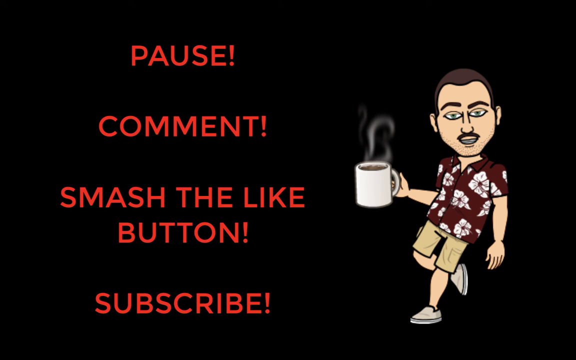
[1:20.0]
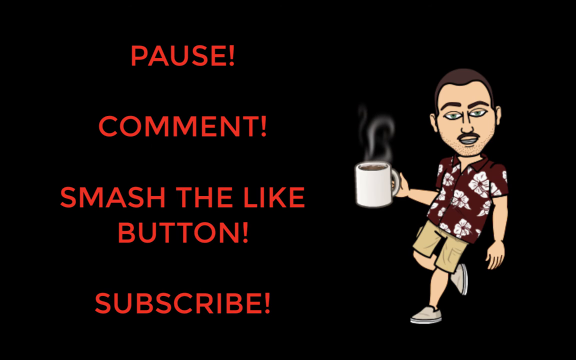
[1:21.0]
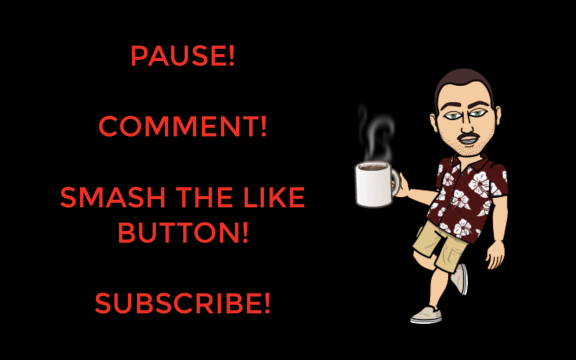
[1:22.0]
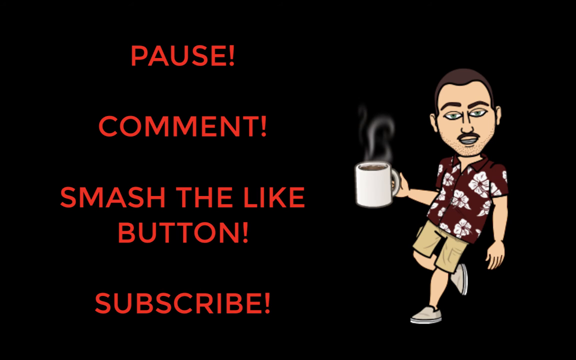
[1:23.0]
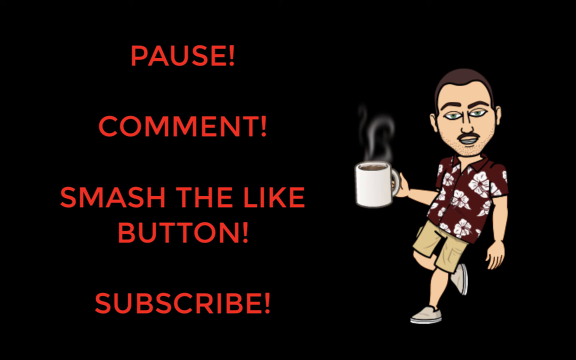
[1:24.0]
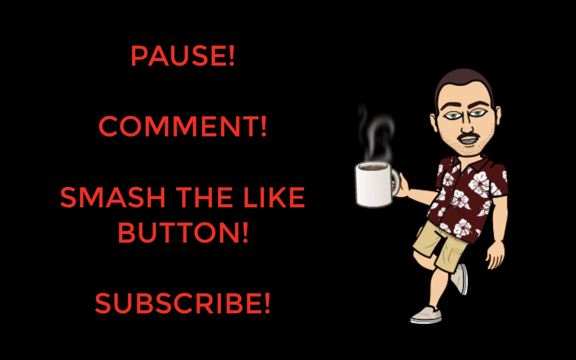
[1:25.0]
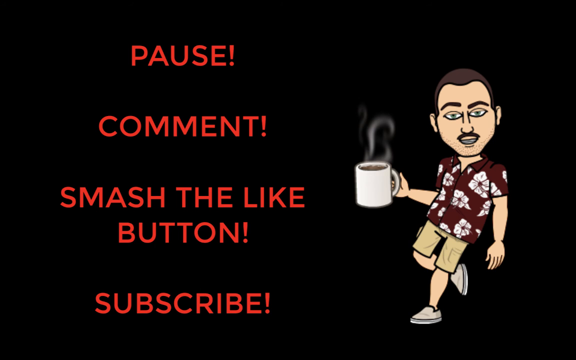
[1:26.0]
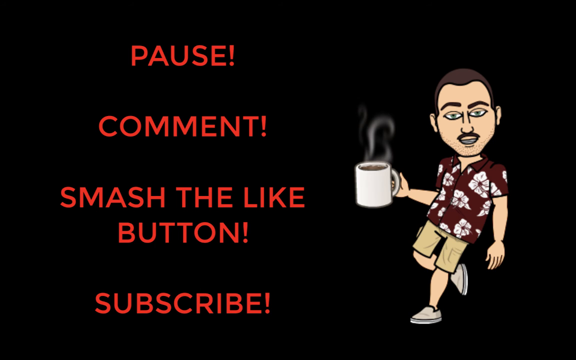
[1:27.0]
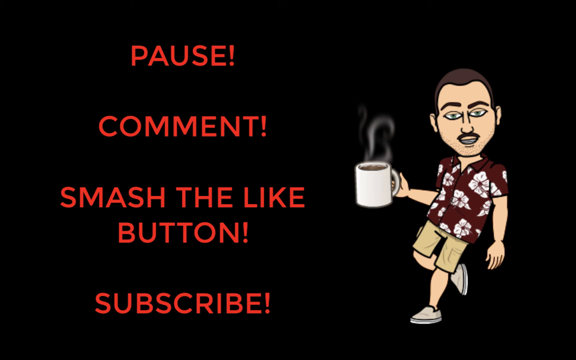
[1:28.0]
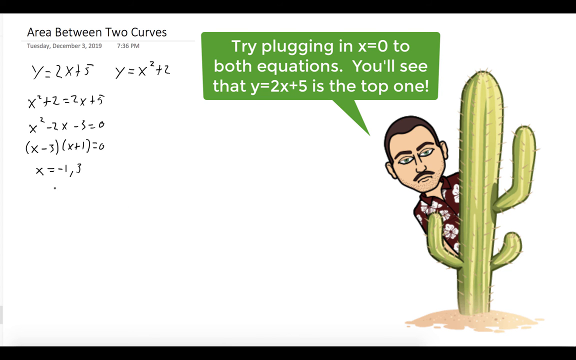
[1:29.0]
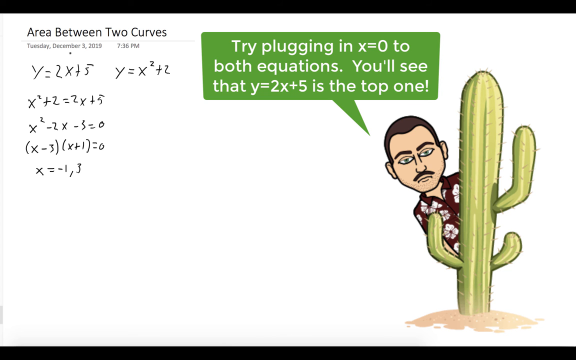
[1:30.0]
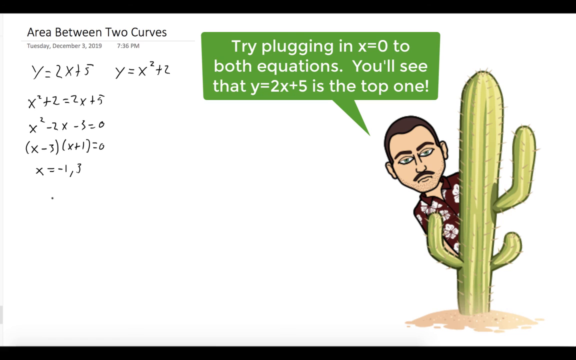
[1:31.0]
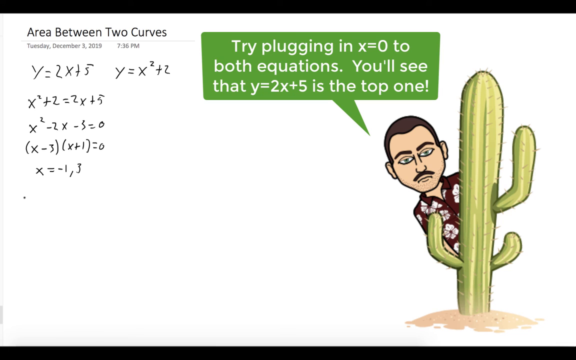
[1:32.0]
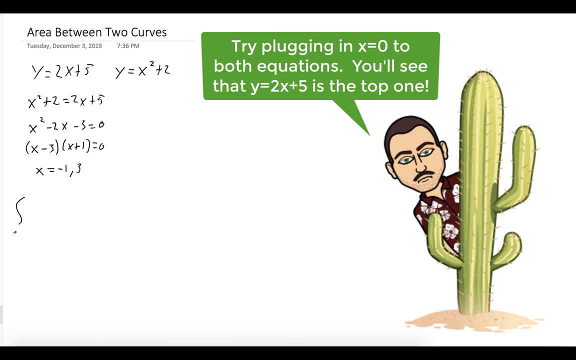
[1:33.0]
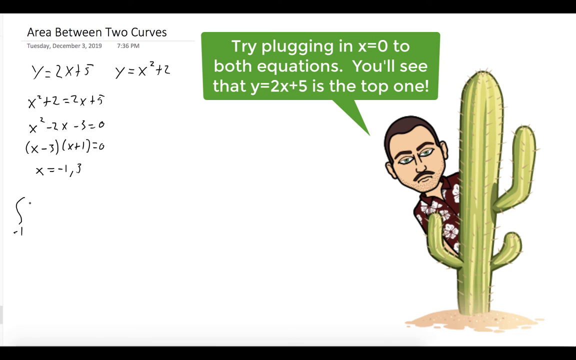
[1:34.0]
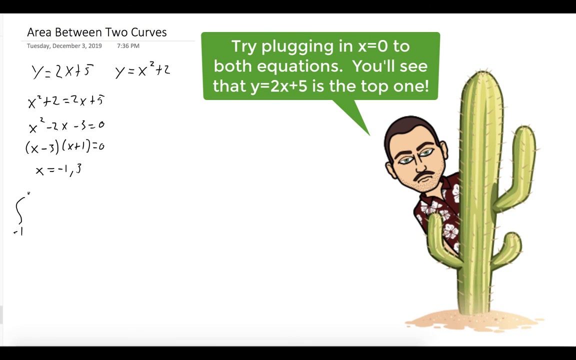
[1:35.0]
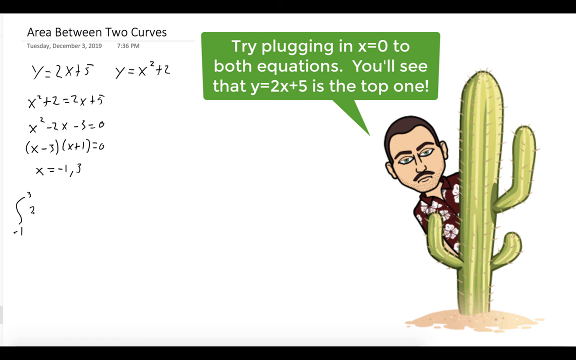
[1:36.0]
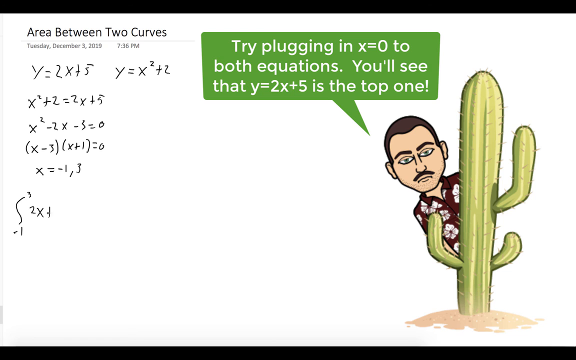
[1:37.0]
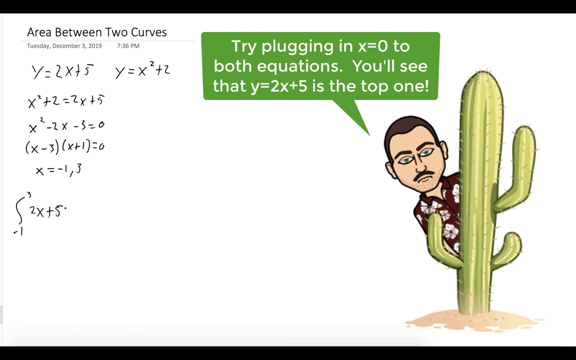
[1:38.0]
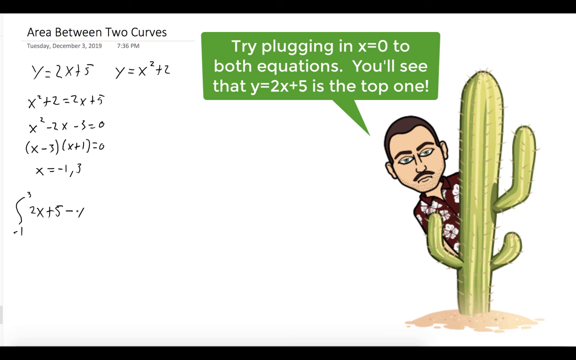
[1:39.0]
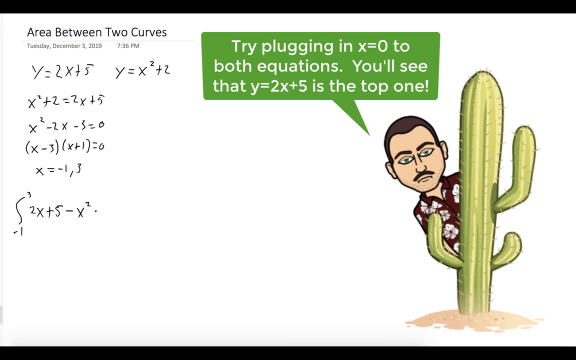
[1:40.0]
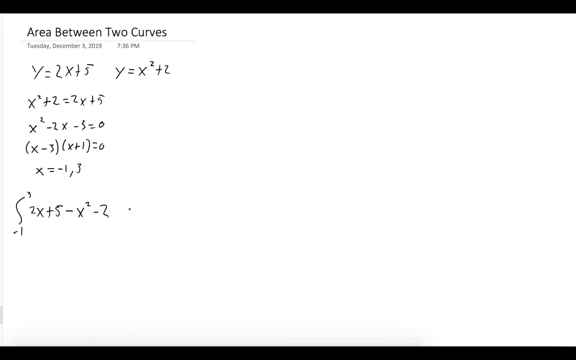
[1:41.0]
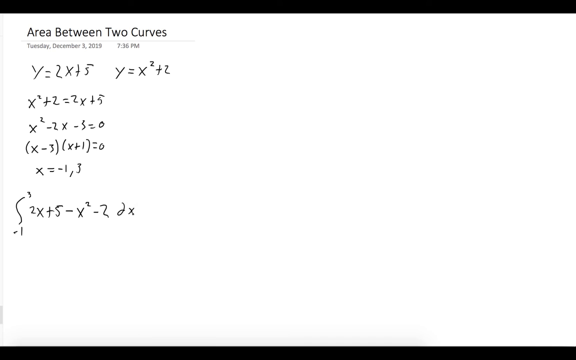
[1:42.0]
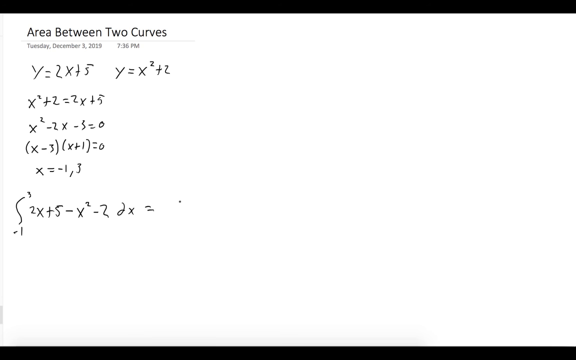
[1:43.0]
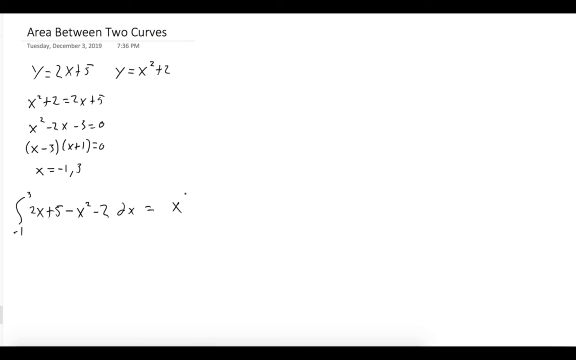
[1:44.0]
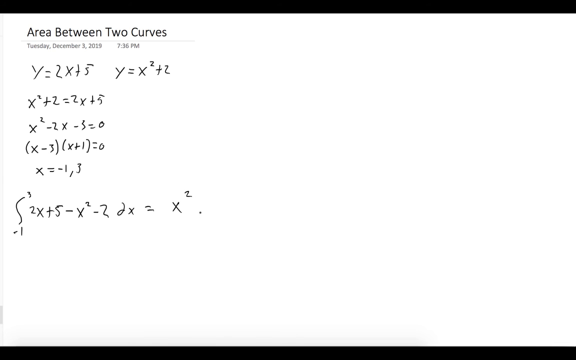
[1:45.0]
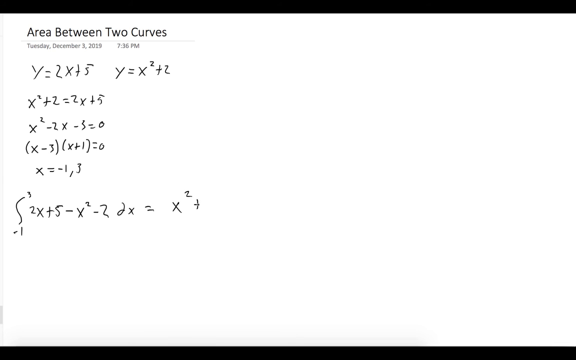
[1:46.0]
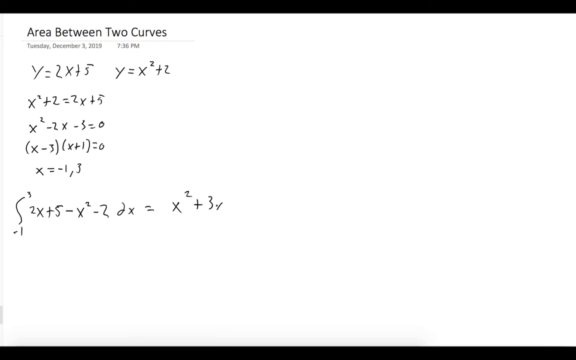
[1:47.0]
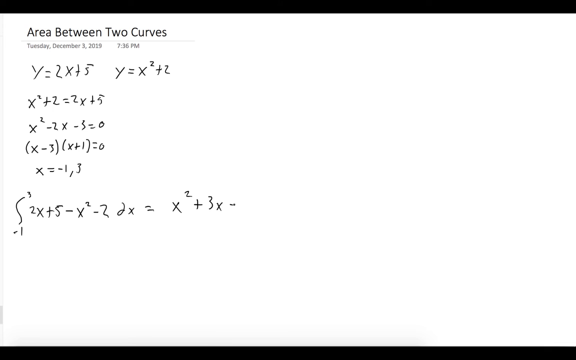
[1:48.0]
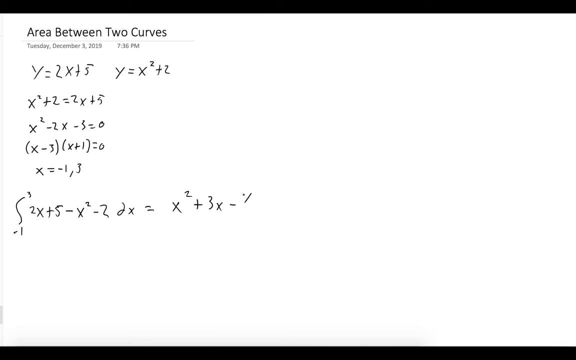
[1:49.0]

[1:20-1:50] After the "pause, comment, smash the like button, and subscribe" screen, the video returns to the rest of the equation. First, the same Snapchat avatar appears on the right, looking like he is behind a cactus, and says "Try plugging in x equals 0 to both equations You'll see that y equals 2x plus 5 is the top one." The work then shows 2x + 5 − x² − 2 being written out, with further terms including 3 and x cubed. At the very end, the avatar pops up again and says "don't be confused remember that 5 minus 2 equals 3 then integrate."